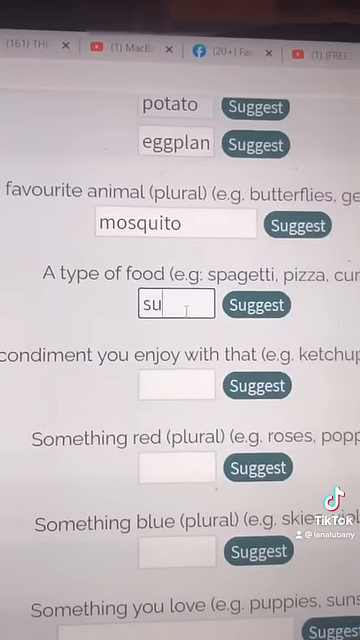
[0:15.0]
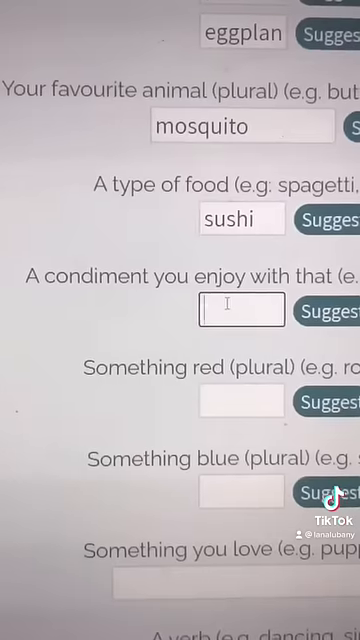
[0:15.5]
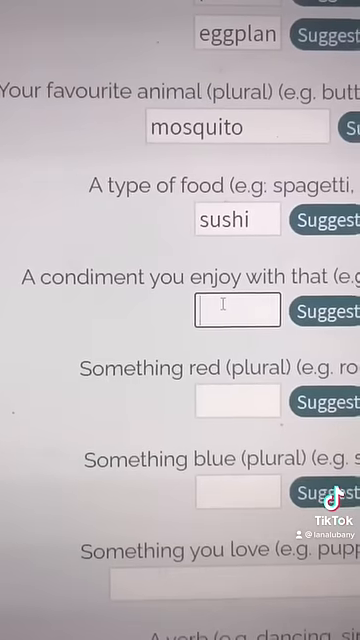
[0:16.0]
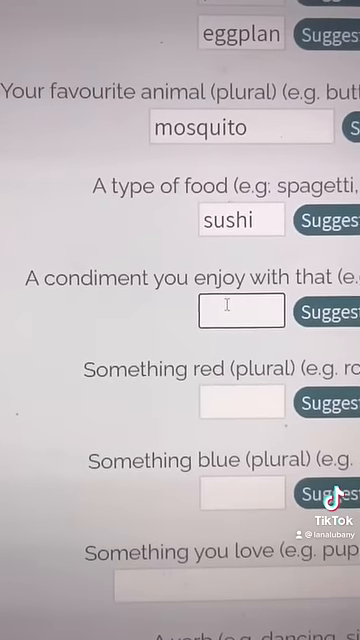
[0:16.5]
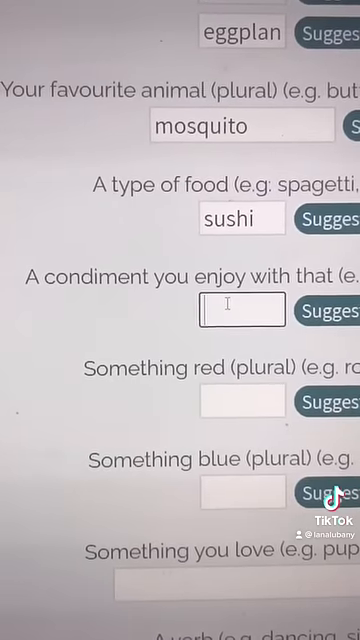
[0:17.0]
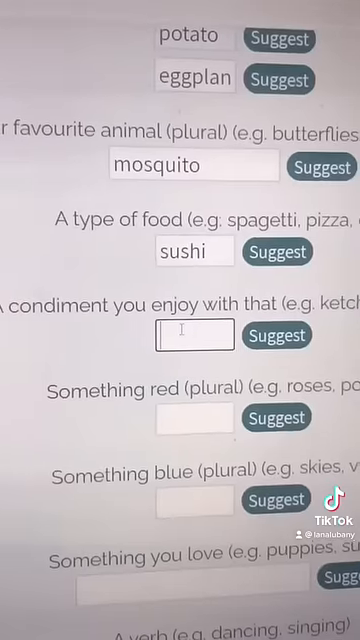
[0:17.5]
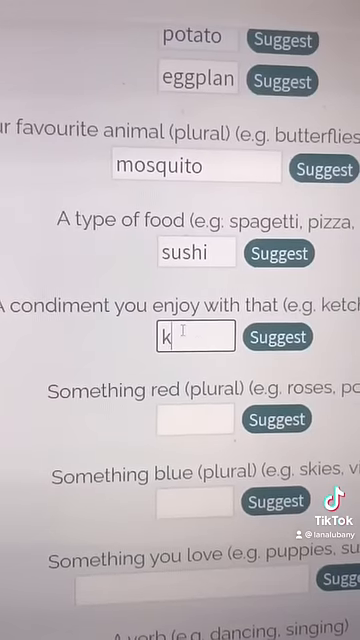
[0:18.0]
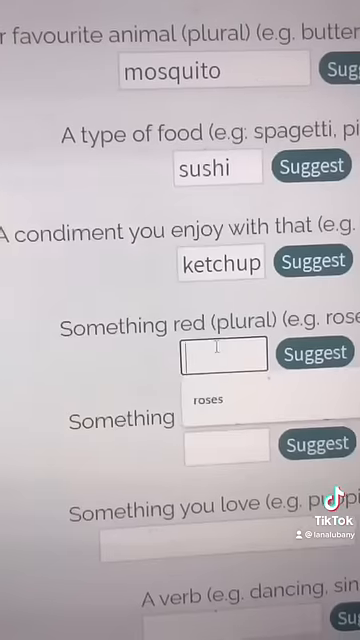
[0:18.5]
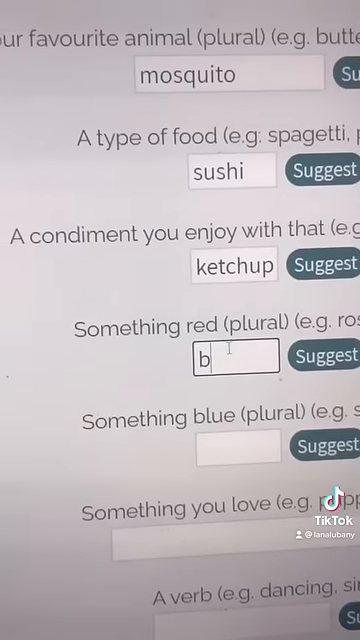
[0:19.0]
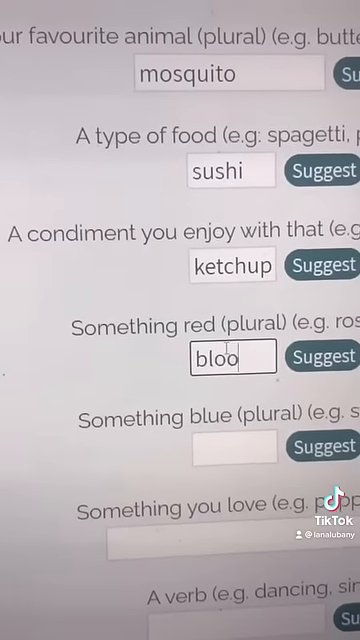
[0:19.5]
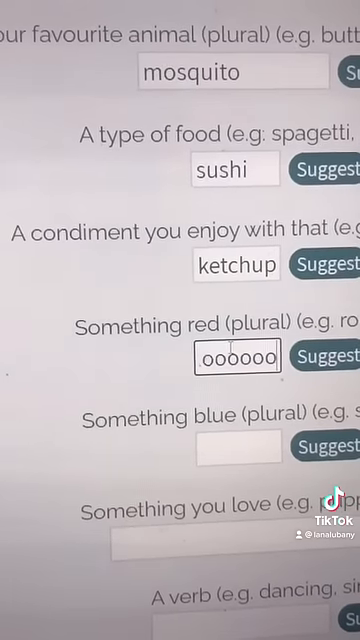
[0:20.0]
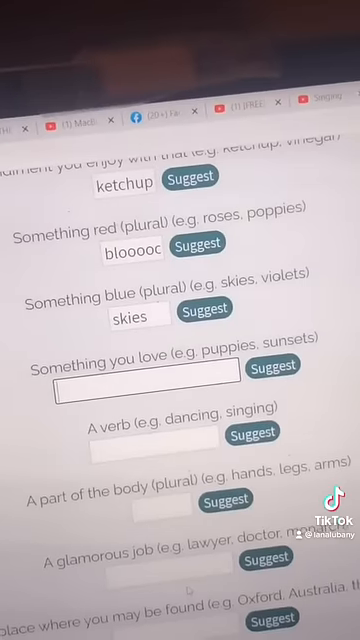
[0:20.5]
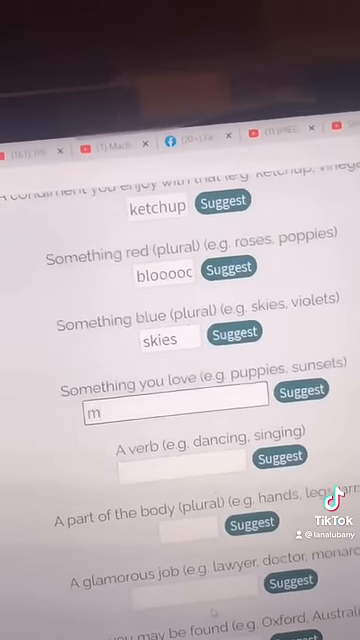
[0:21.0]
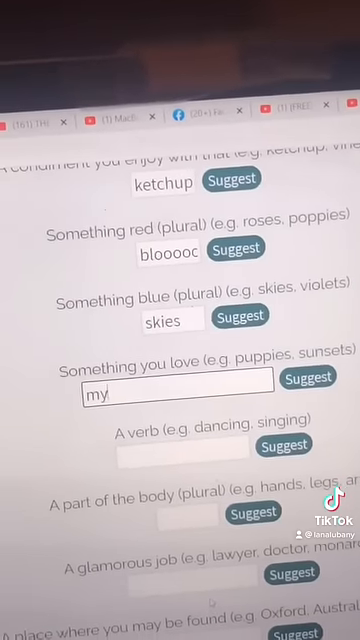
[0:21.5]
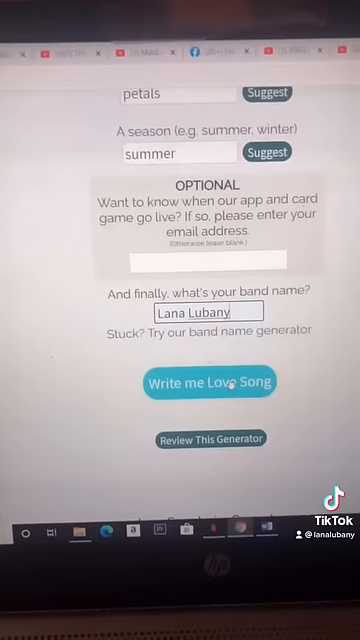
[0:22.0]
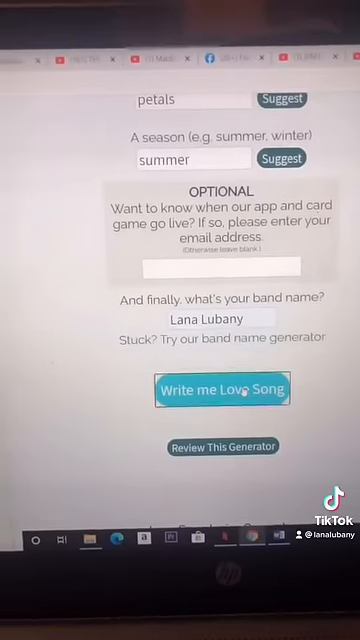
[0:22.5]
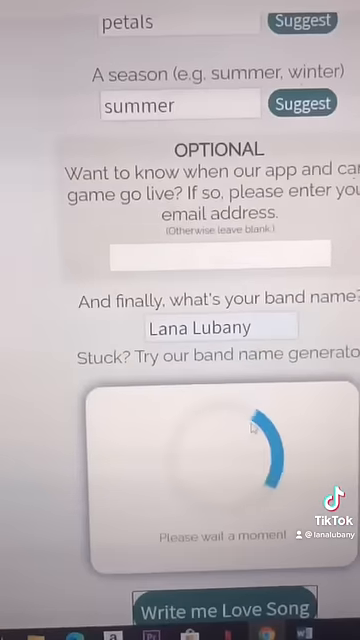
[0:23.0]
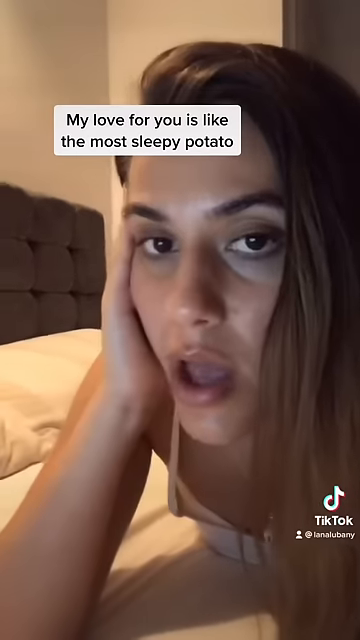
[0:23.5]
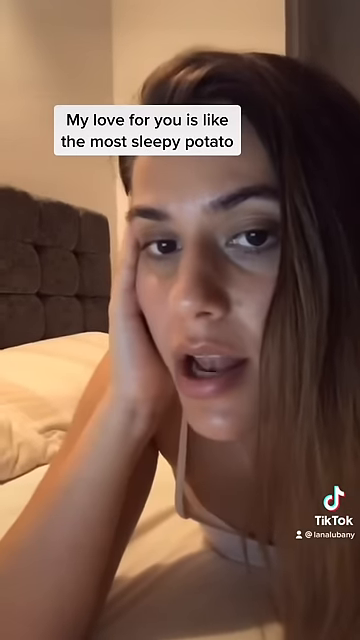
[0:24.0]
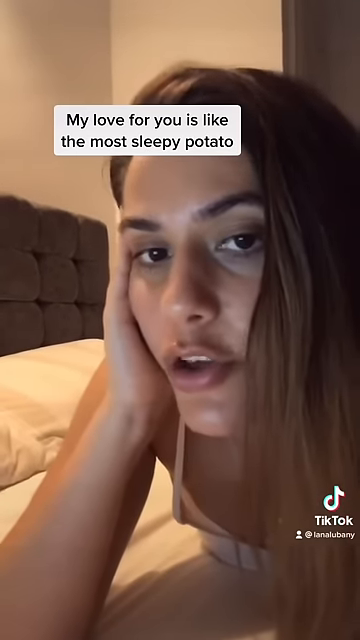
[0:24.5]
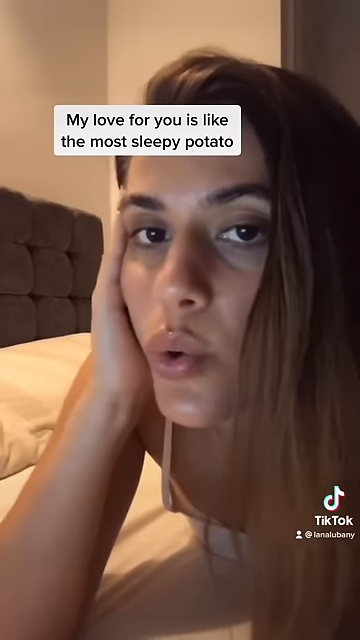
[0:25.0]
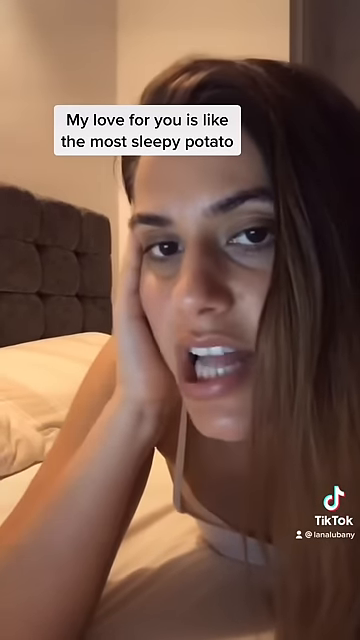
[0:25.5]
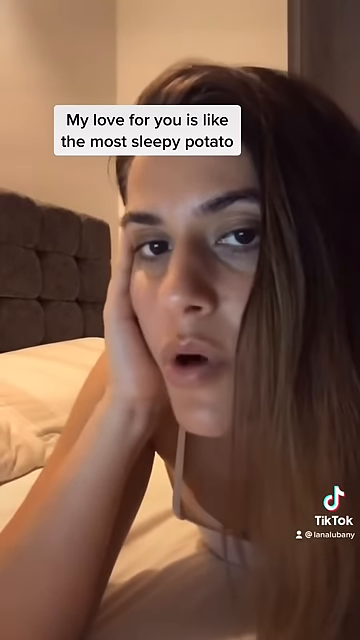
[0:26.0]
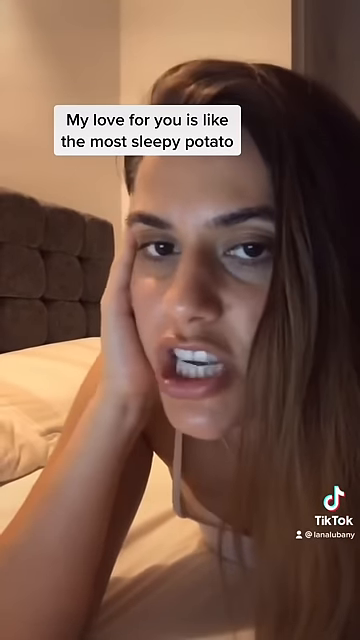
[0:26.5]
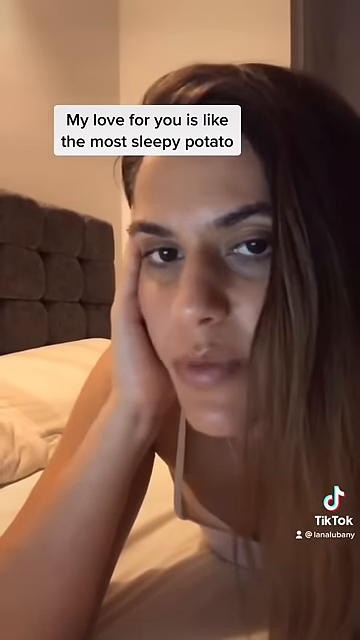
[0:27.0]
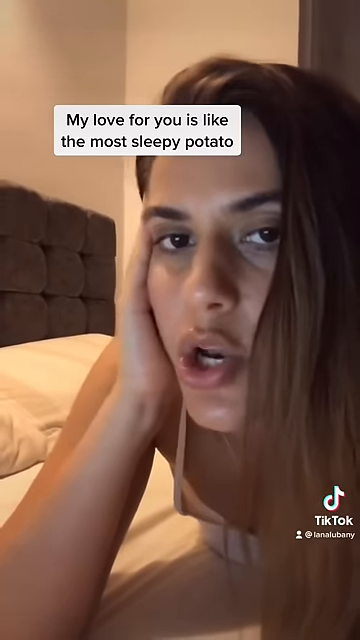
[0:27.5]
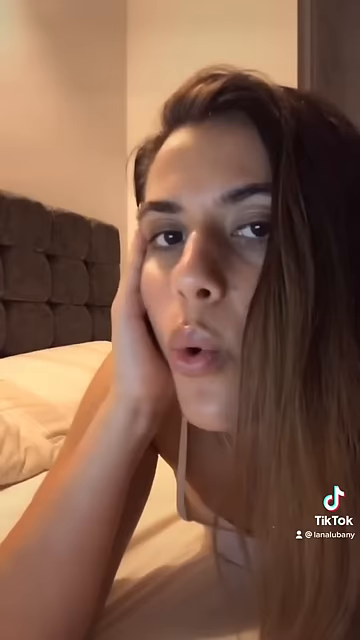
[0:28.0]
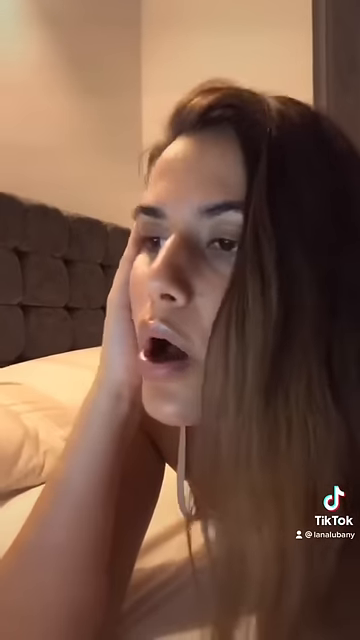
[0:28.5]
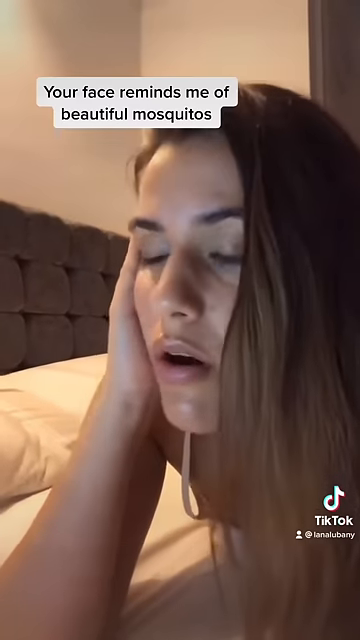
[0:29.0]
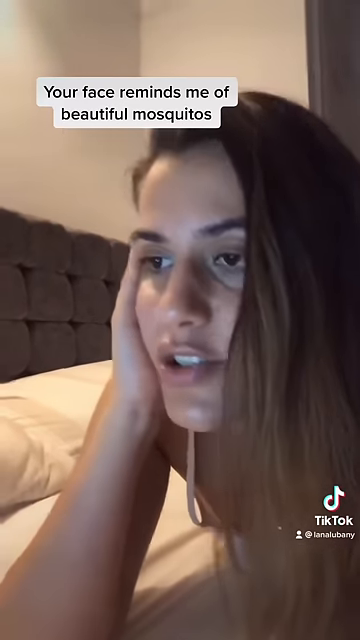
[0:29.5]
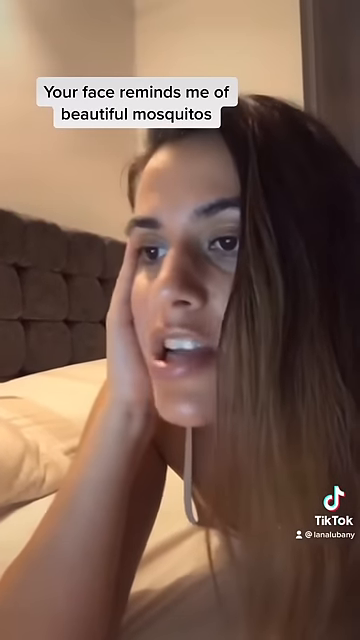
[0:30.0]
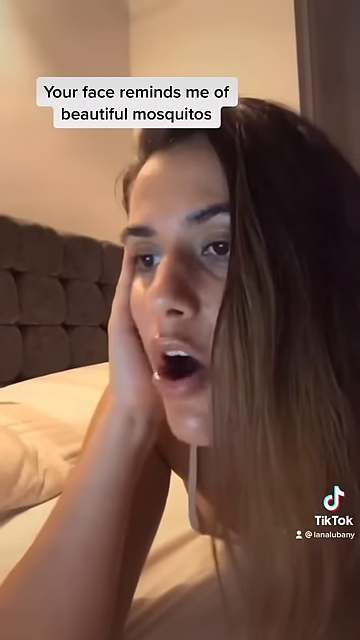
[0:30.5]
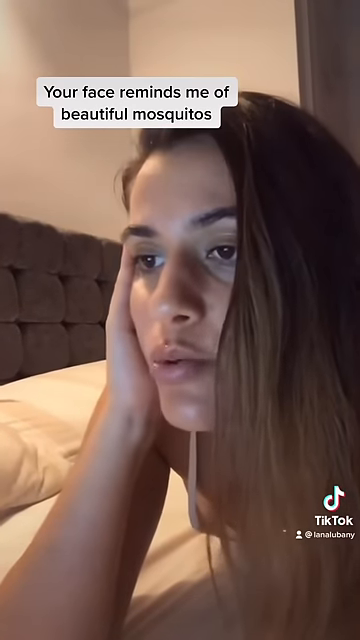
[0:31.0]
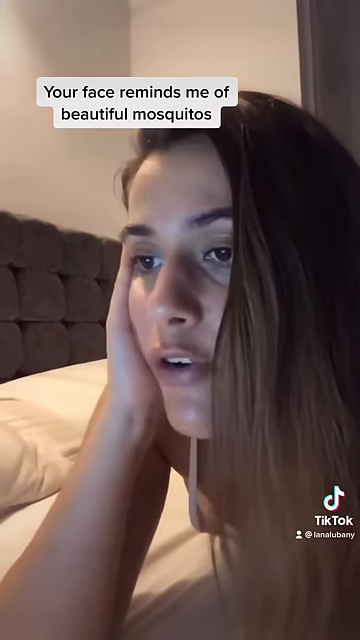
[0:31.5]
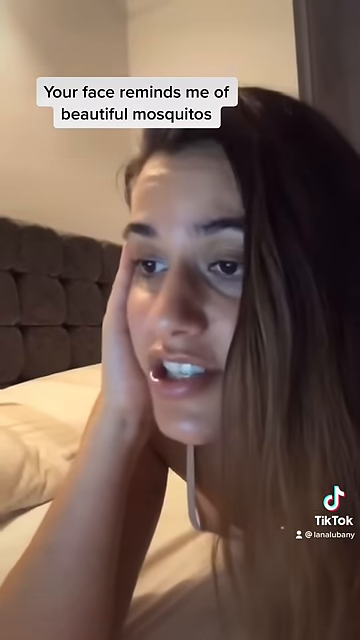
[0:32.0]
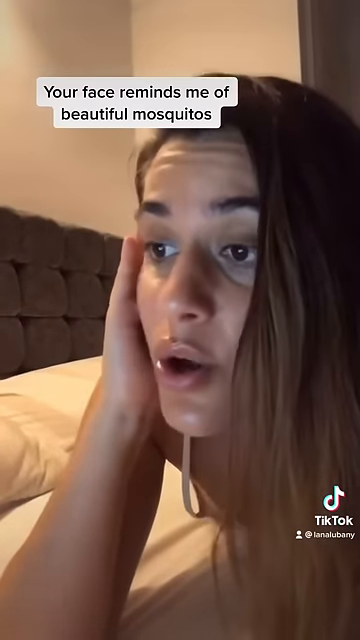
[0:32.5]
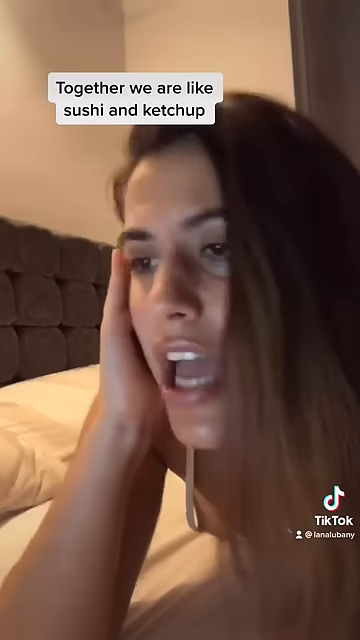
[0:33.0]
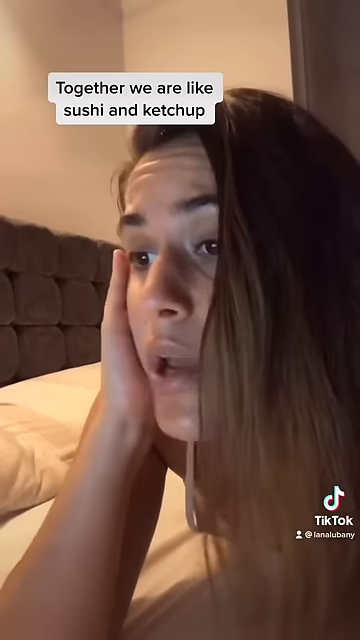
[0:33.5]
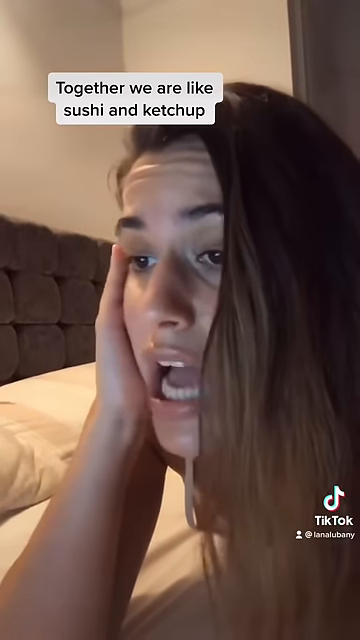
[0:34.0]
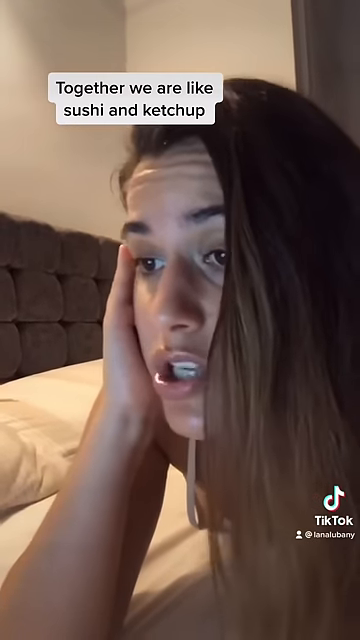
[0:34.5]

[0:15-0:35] The screen shows an example of what the program looks like, and a person types random words into the generator. The woman then lies on a bed, probably singing. Printed words of what she is singing appear at the top of the frame, but they are too small to read. Only one person appears.